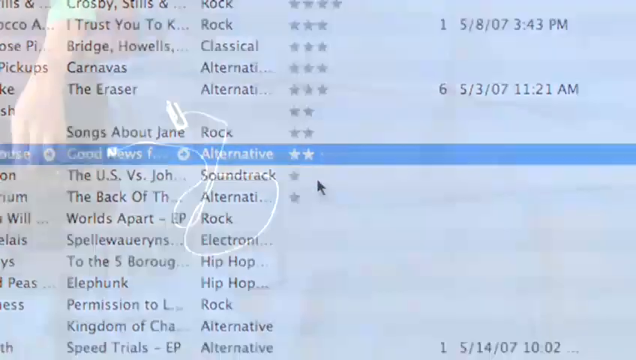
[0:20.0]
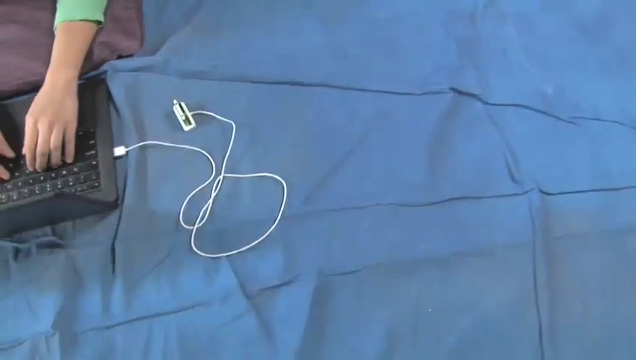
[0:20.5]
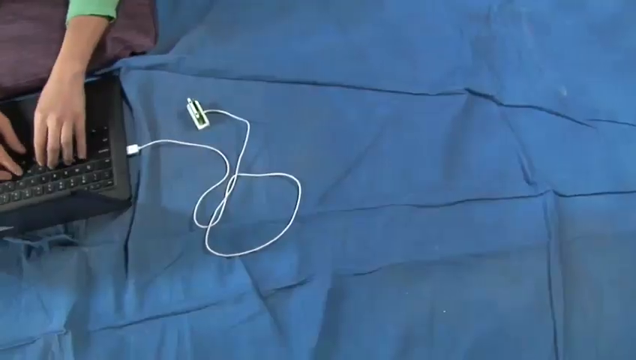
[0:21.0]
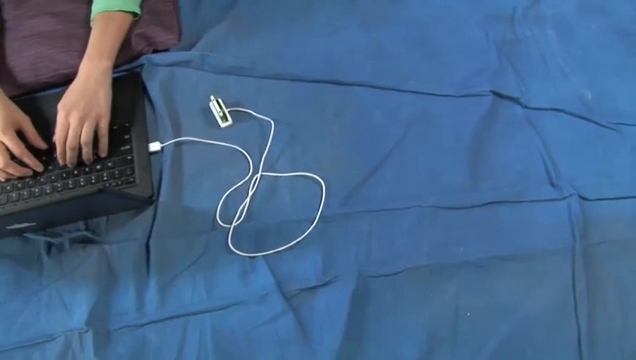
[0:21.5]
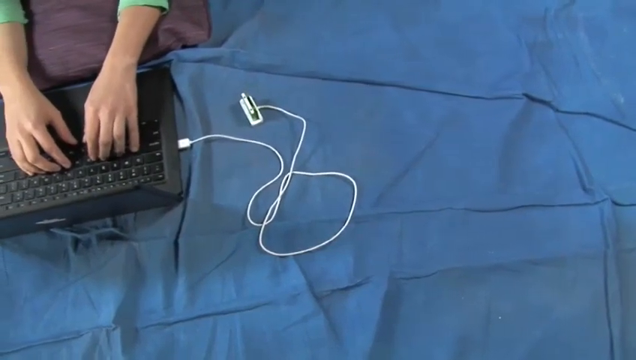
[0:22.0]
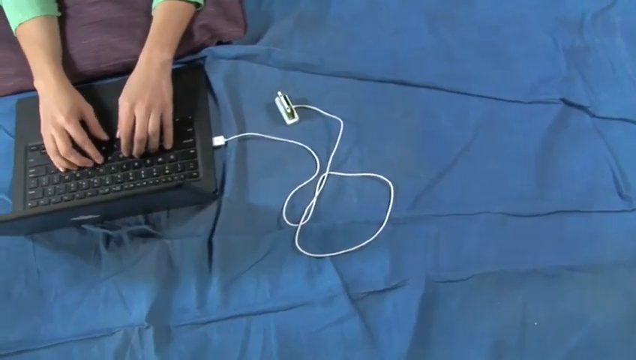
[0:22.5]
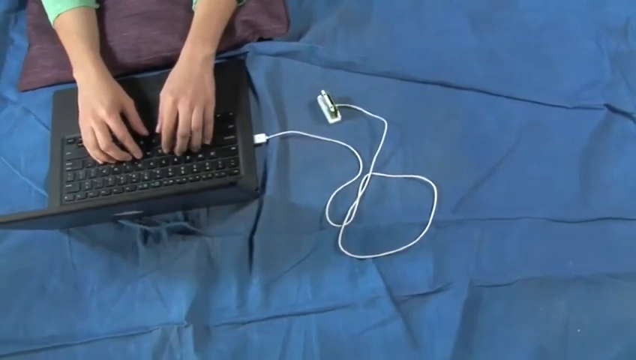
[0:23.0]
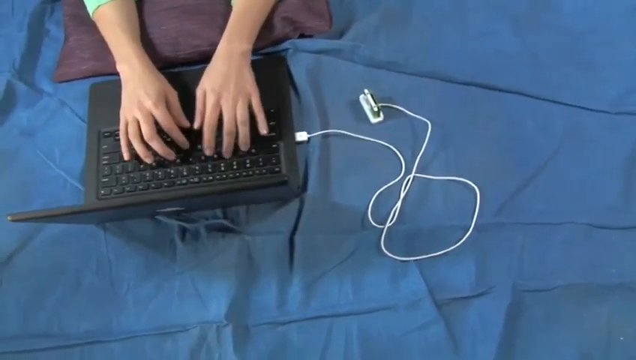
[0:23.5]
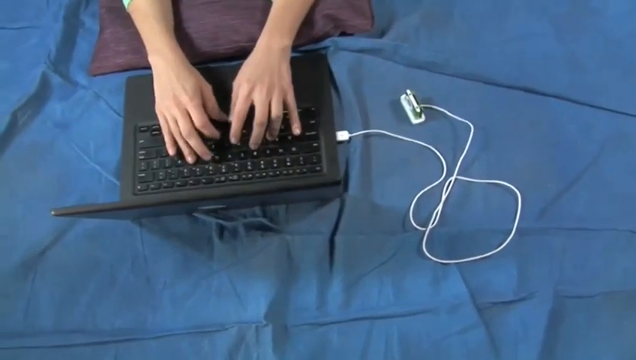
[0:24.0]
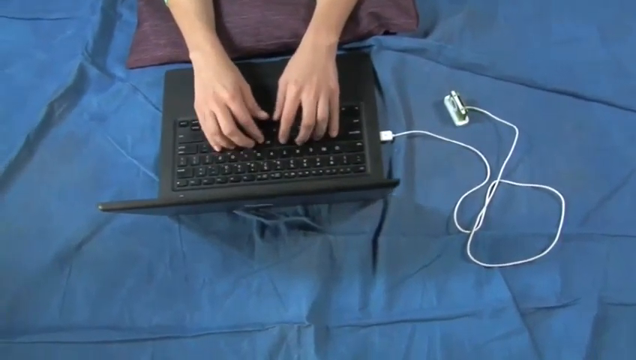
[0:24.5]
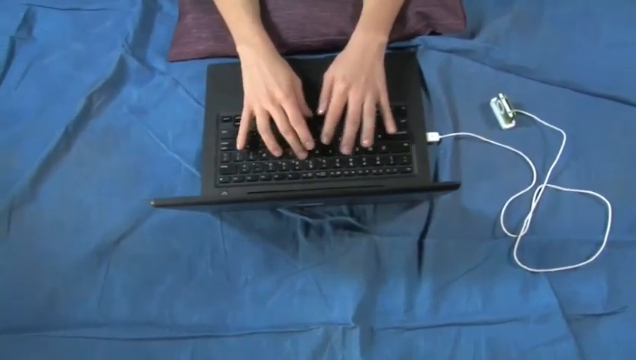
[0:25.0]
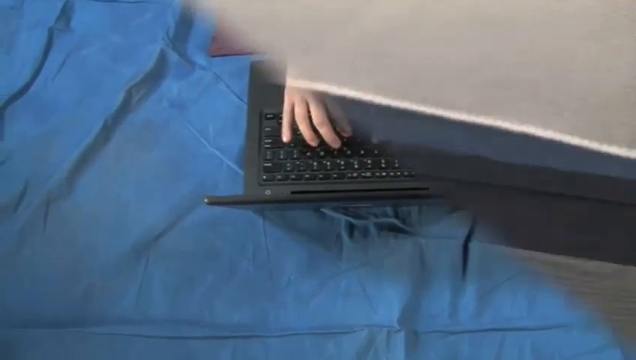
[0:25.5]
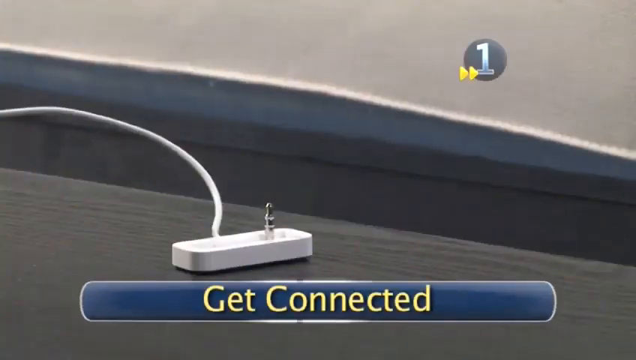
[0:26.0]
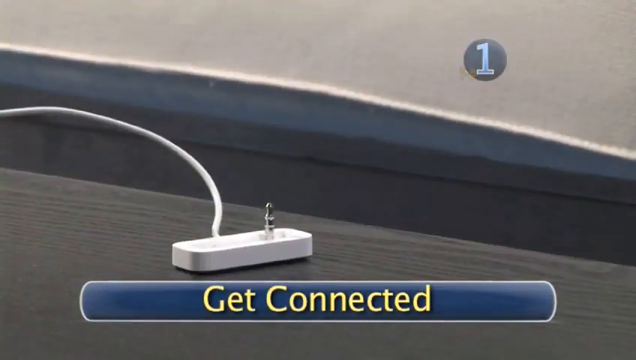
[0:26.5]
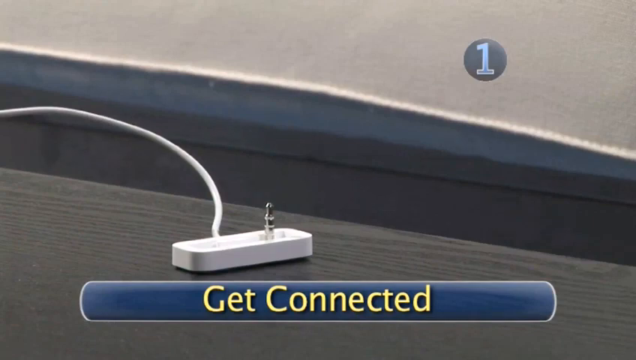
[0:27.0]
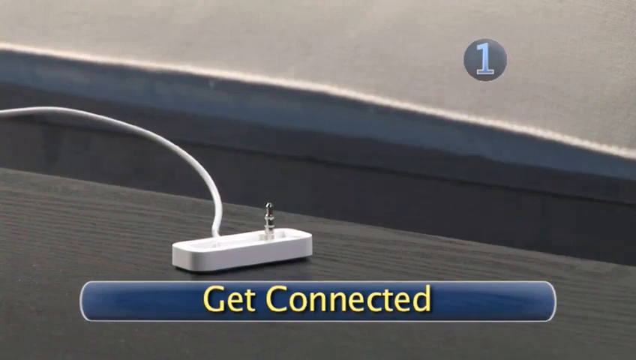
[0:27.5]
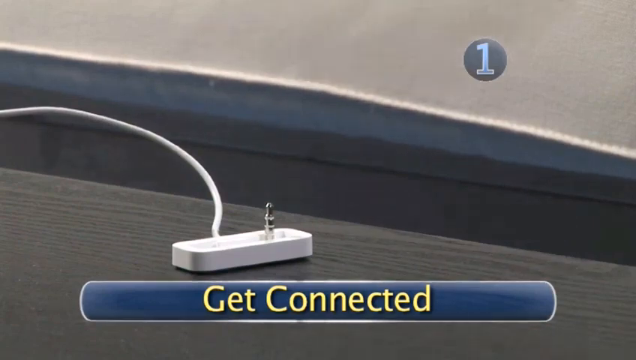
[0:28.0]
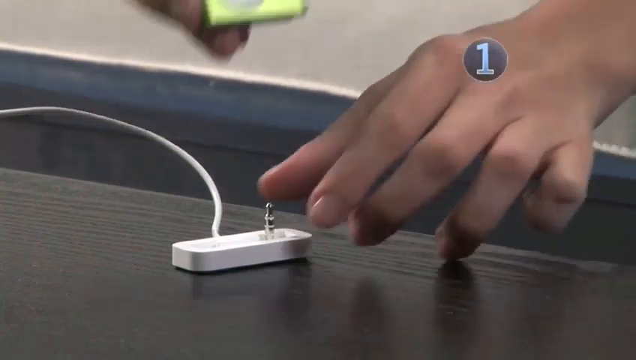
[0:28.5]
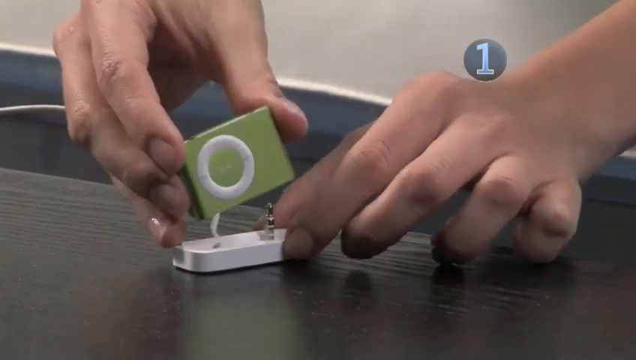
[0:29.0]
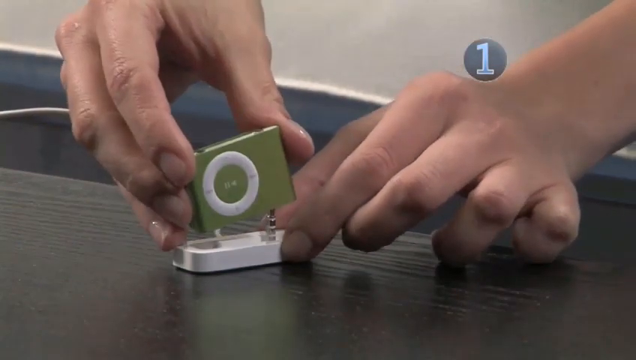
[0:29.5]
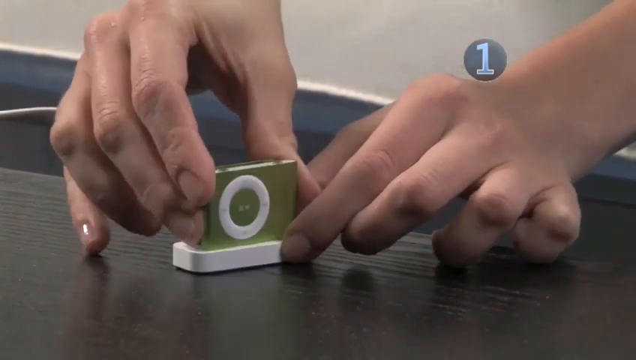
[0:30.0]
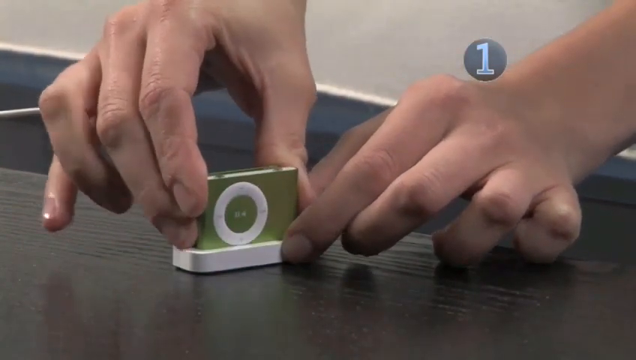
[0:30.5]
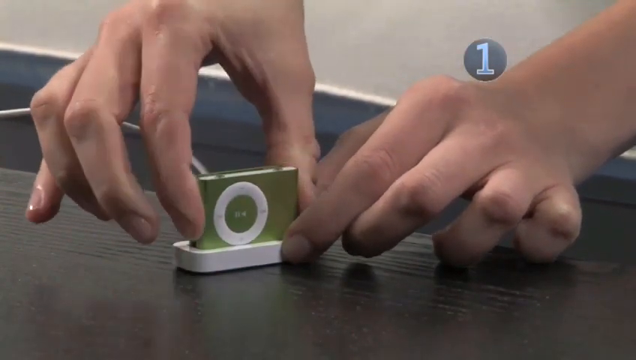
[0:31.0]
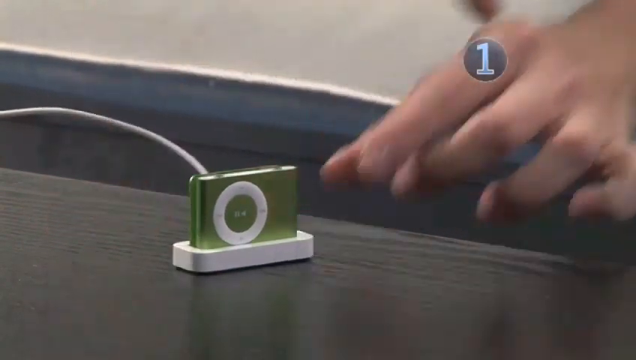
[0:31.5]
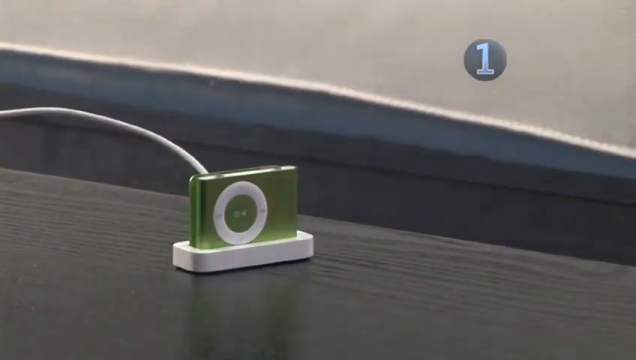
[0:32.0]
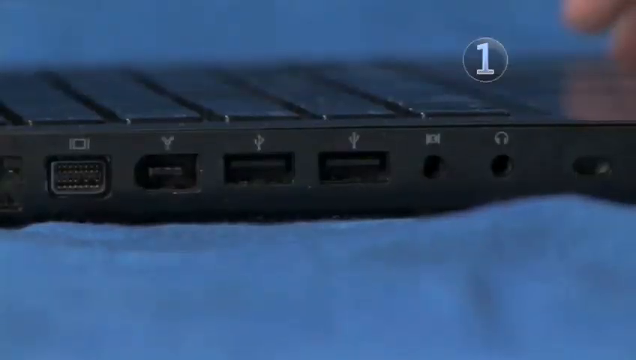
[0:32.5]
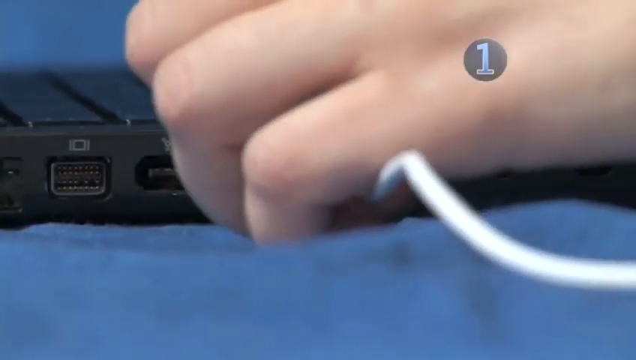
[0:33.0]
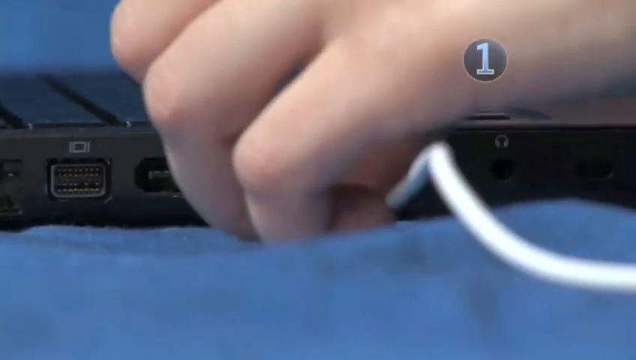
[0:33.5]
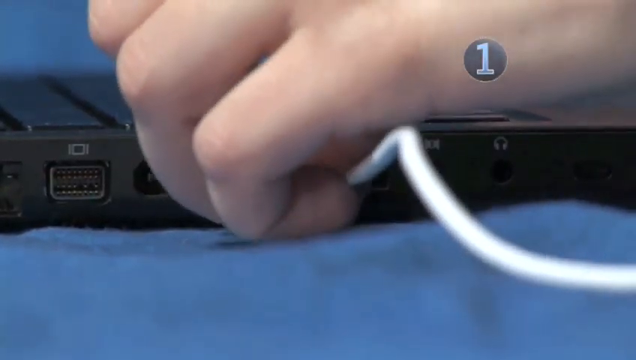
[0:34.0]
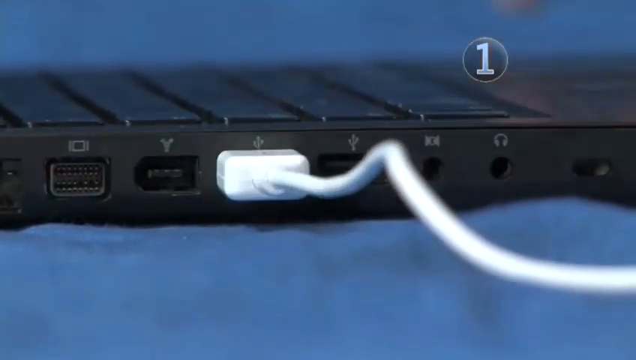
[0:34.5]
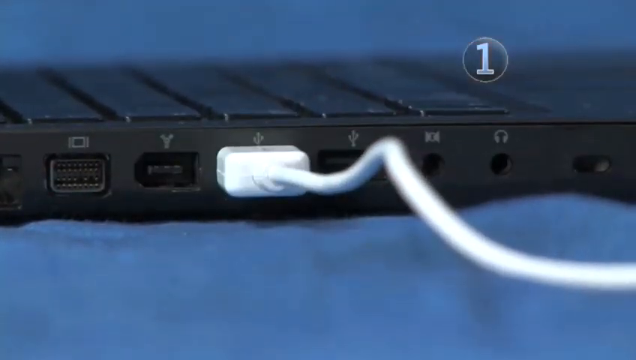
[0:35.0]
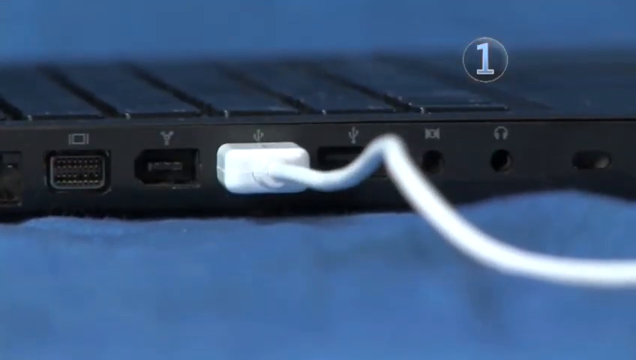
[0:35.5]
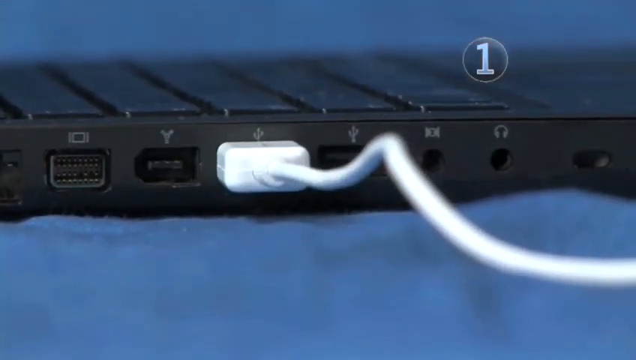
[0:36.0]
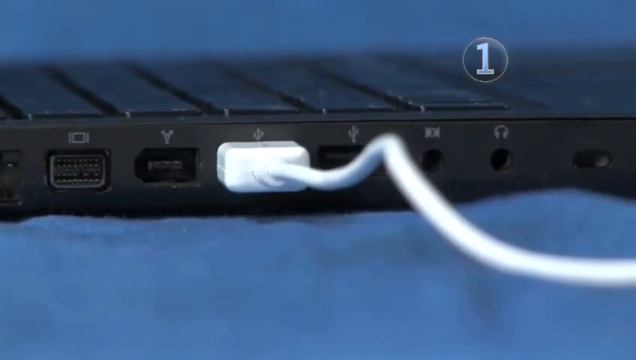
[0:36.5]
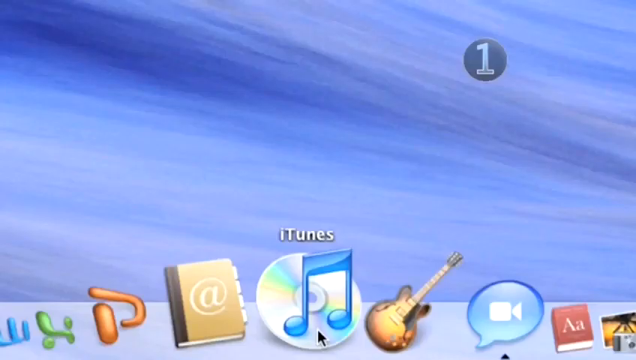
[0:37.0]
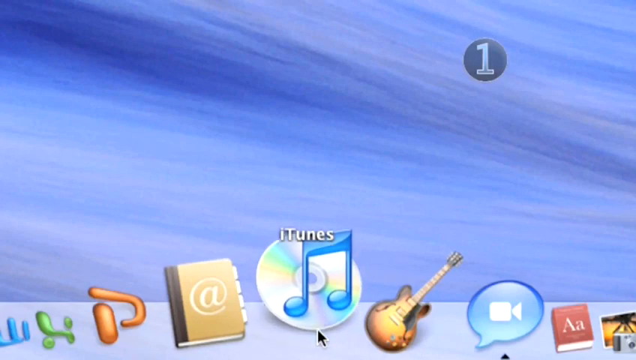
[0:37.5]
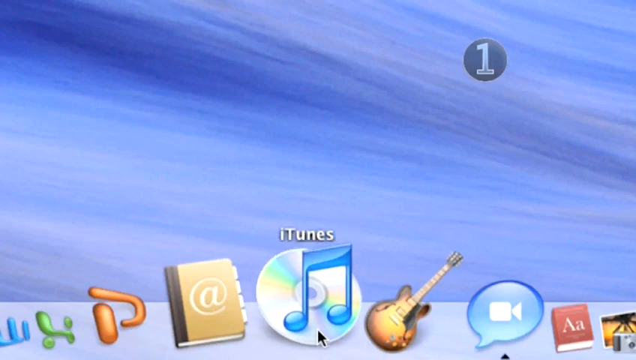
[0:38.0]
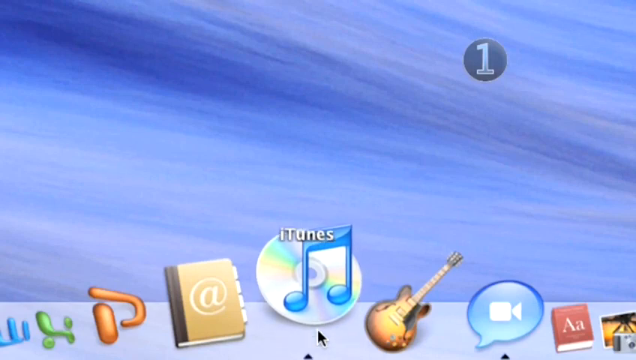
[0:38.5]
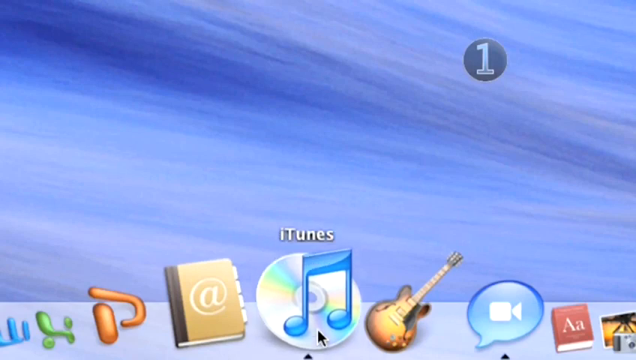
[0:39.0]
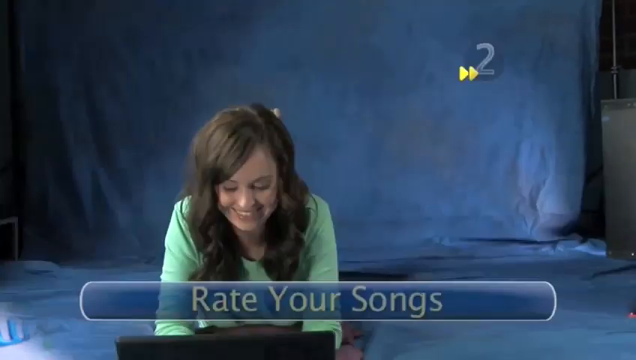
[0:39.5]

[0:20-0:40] A girl types on her laptop. She seems to be lying on a bed with a blue sheet, on a purple pillow. The laptop is black and has a white cable plugged into it, connected to the green iPod shuffle. Only her hands typing are visible. The scene switches to a screen showing an iPod shuffle charging dock with the text "get connected" on it. Someone plugs the green iPod shuffle into the charging station and plugs the charging station via USB into the side of the black laptop. Someone then clicks on the iTunes symbol on the computer screen. At the end, the video briefly pans back to the girl smiling at the laptop, with the text "Rate Your Song."